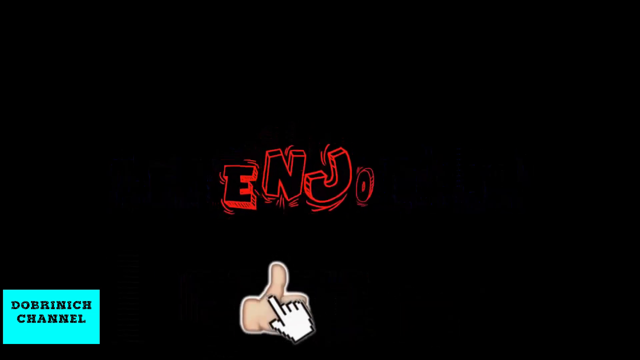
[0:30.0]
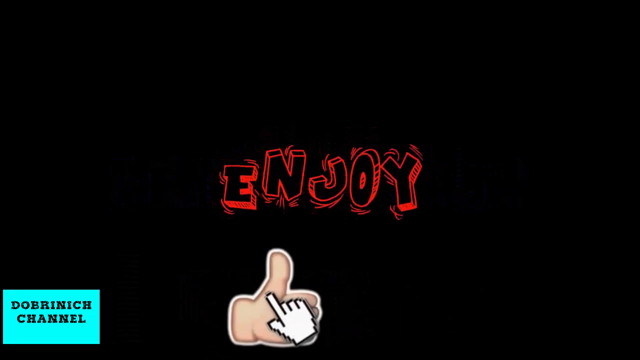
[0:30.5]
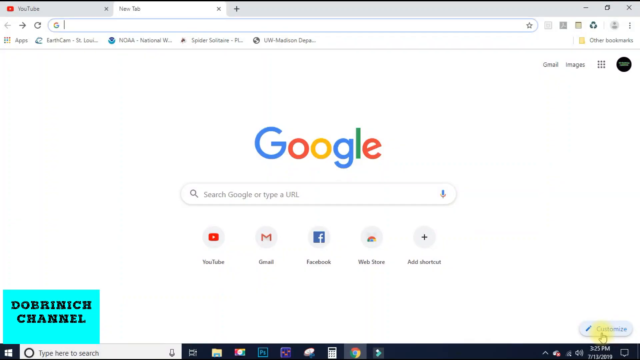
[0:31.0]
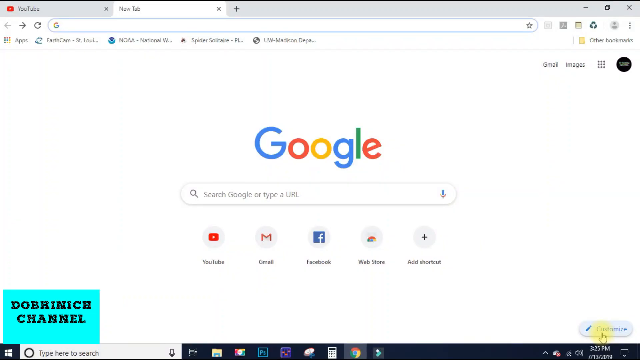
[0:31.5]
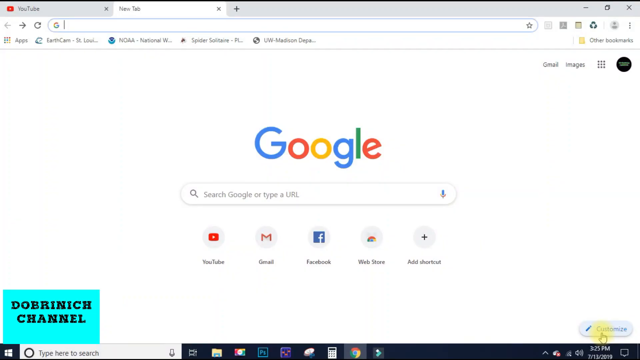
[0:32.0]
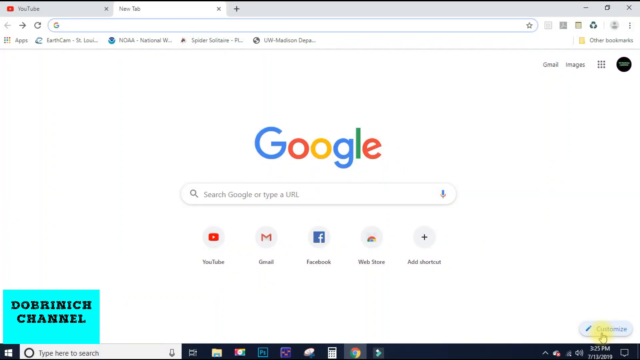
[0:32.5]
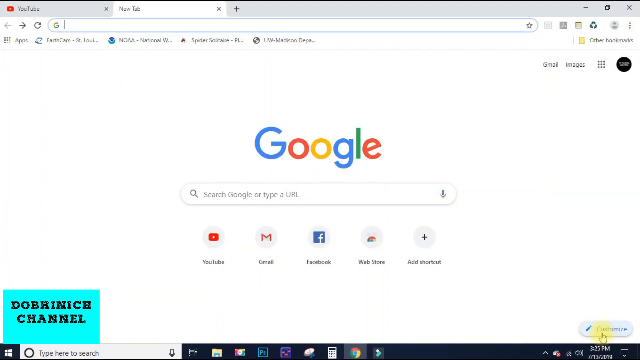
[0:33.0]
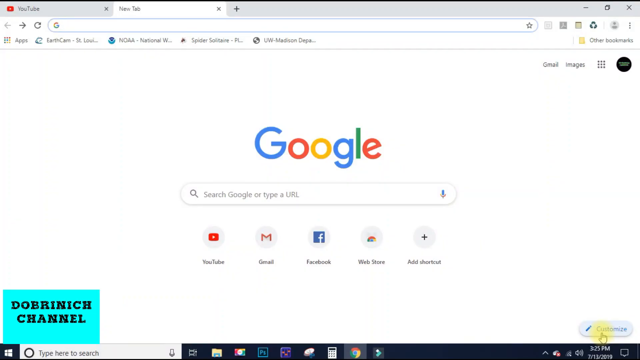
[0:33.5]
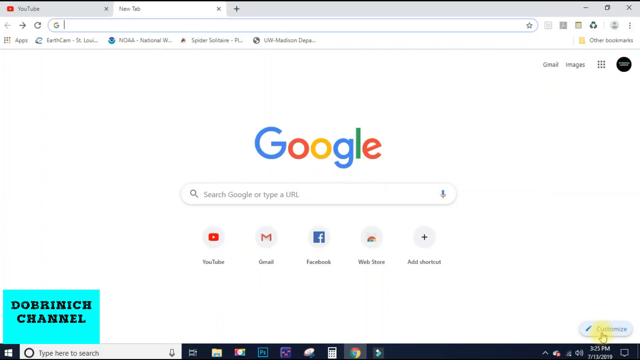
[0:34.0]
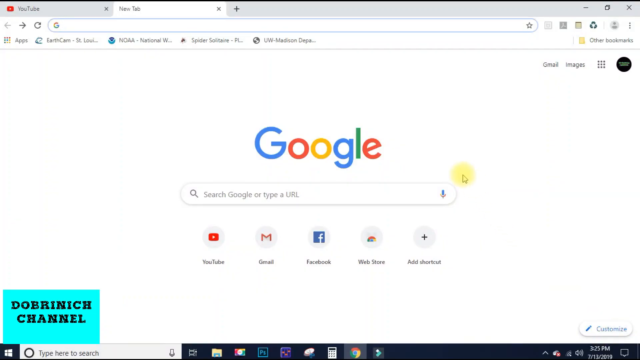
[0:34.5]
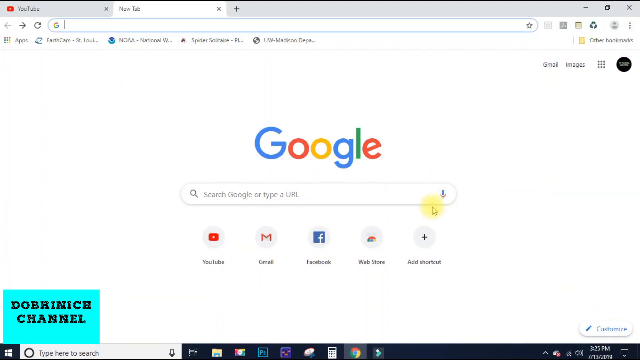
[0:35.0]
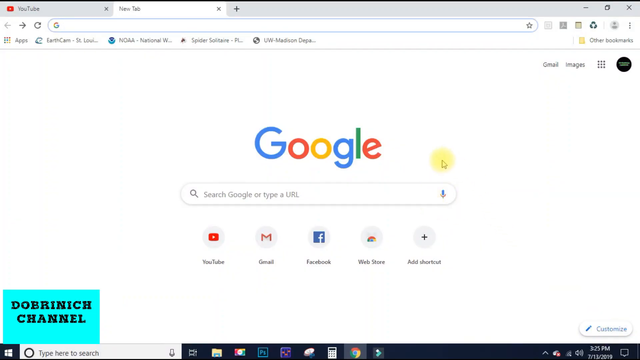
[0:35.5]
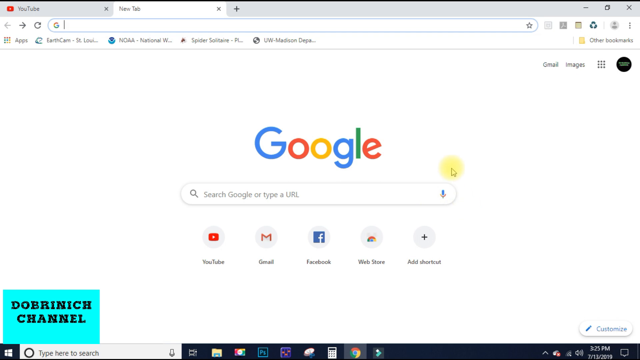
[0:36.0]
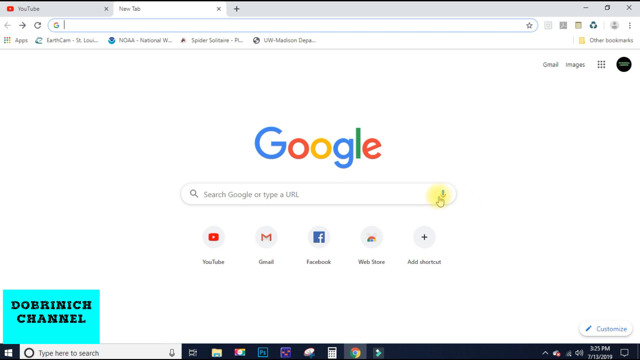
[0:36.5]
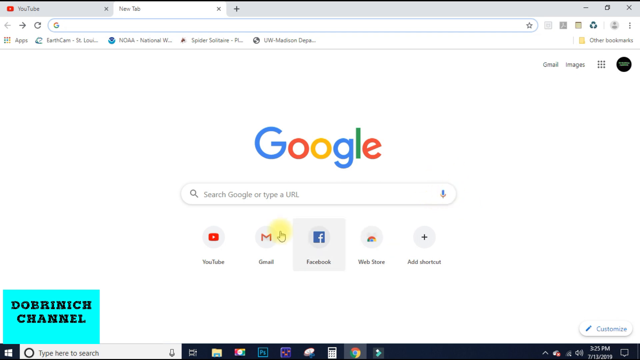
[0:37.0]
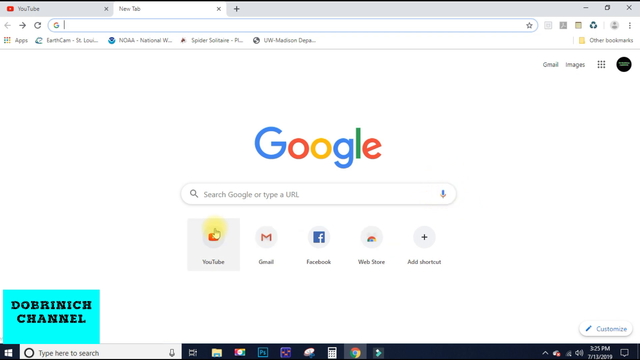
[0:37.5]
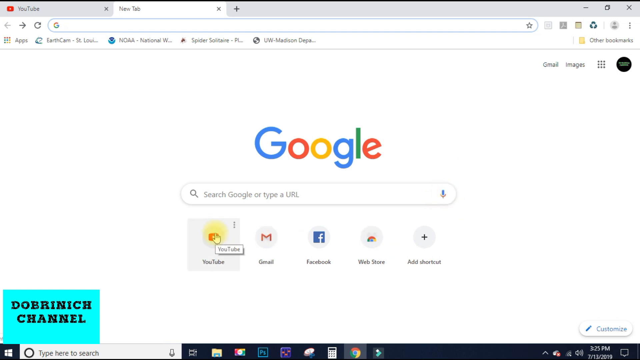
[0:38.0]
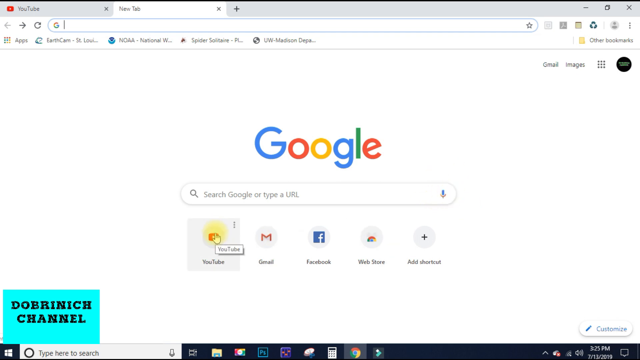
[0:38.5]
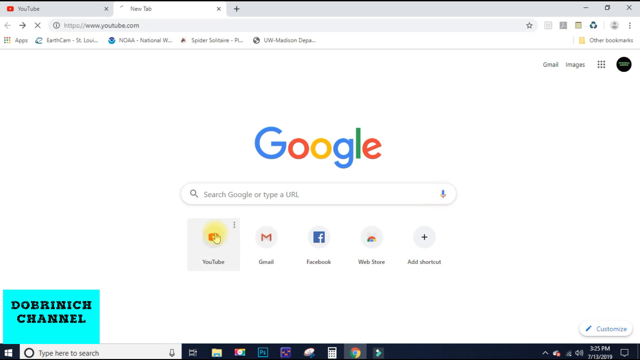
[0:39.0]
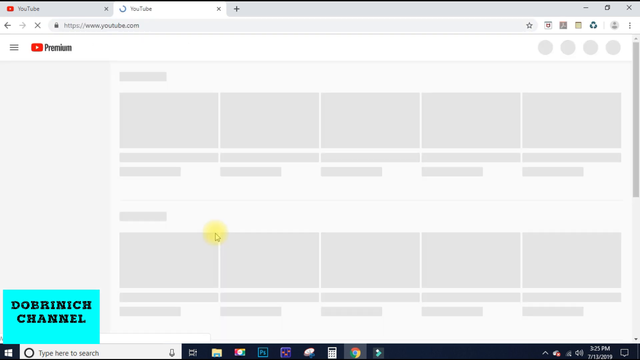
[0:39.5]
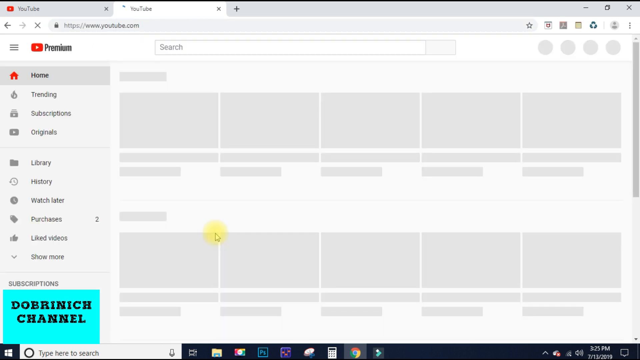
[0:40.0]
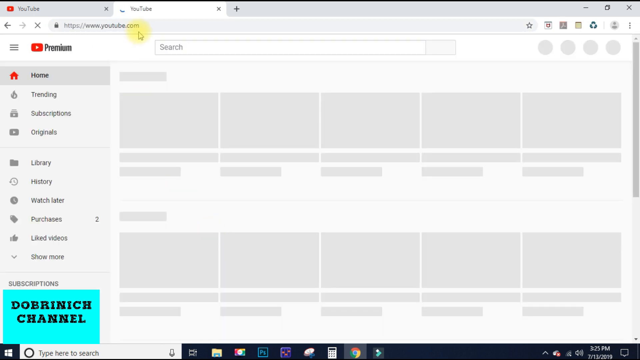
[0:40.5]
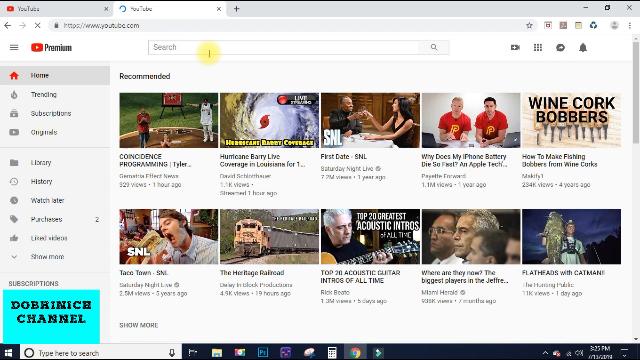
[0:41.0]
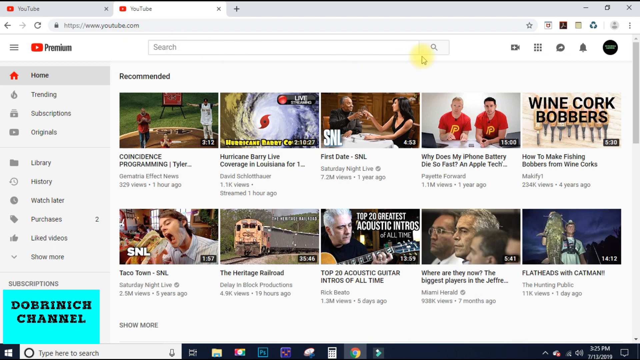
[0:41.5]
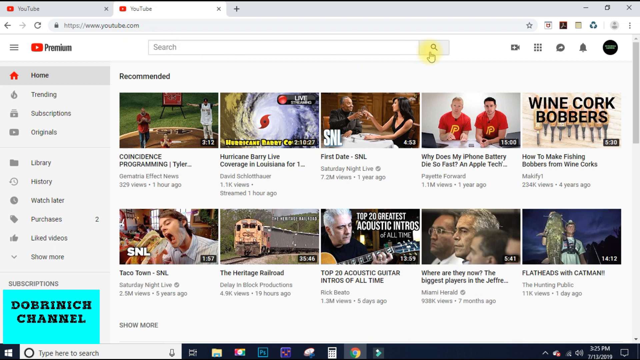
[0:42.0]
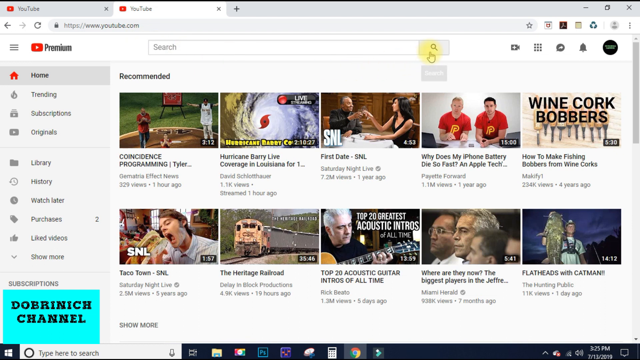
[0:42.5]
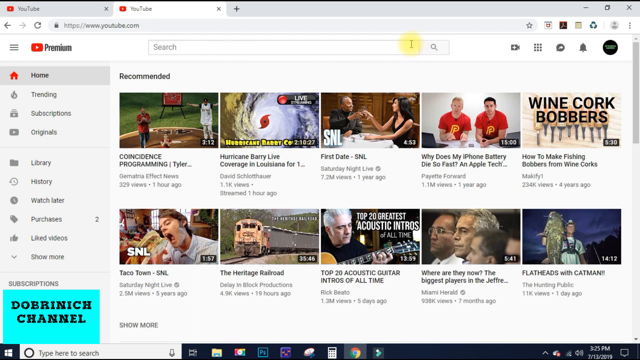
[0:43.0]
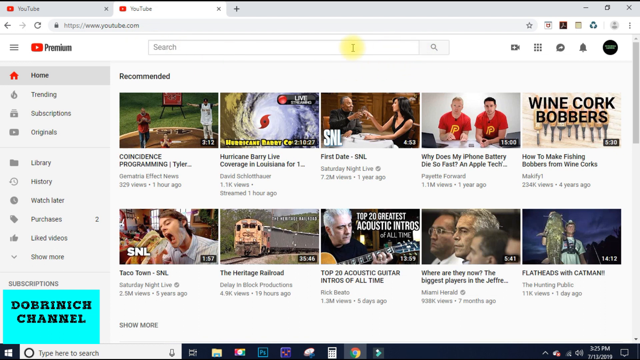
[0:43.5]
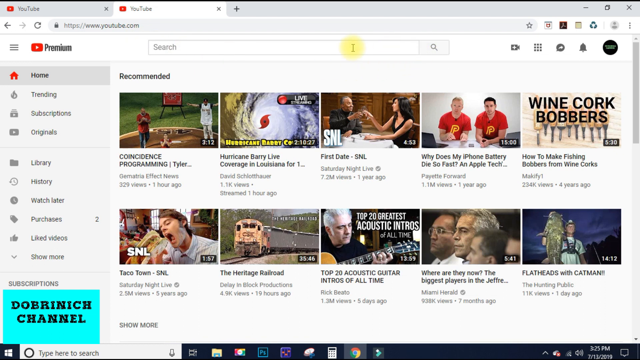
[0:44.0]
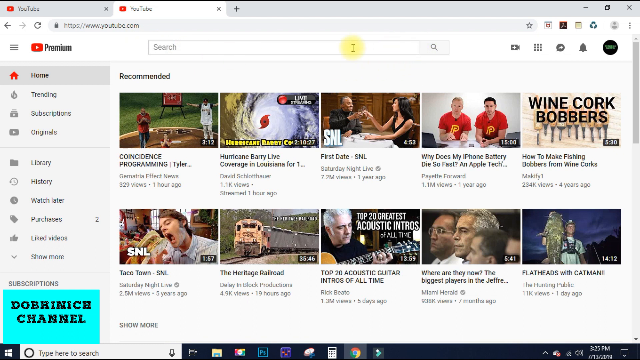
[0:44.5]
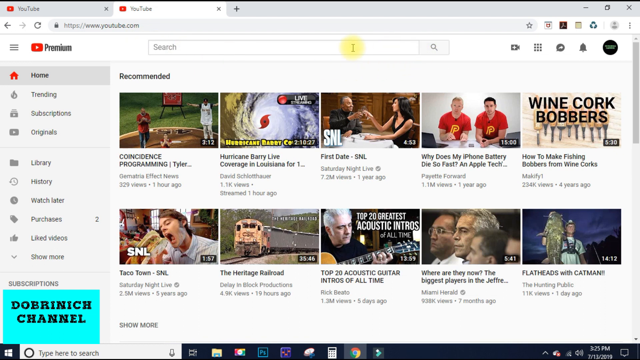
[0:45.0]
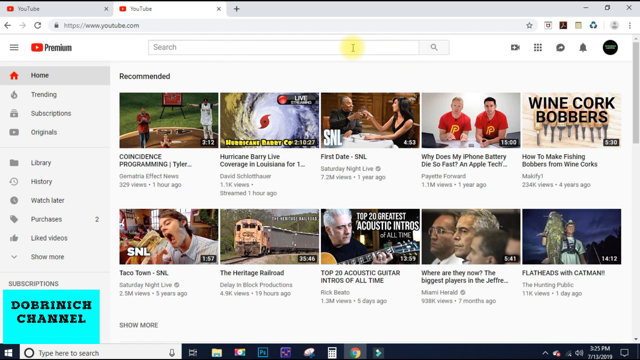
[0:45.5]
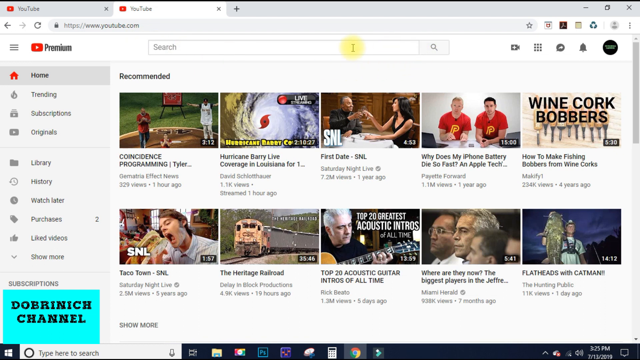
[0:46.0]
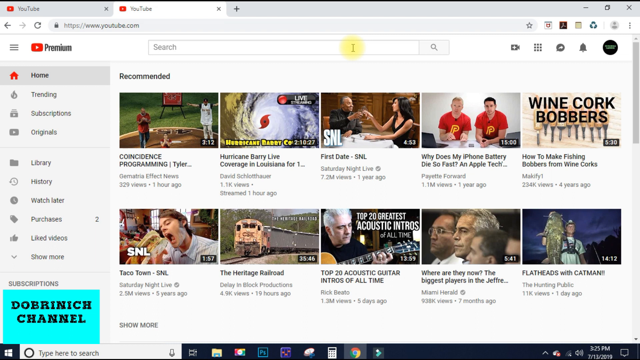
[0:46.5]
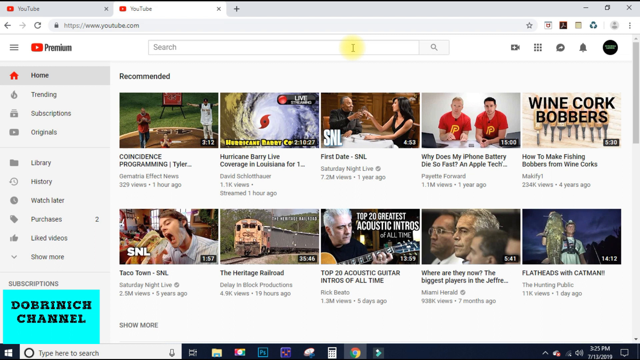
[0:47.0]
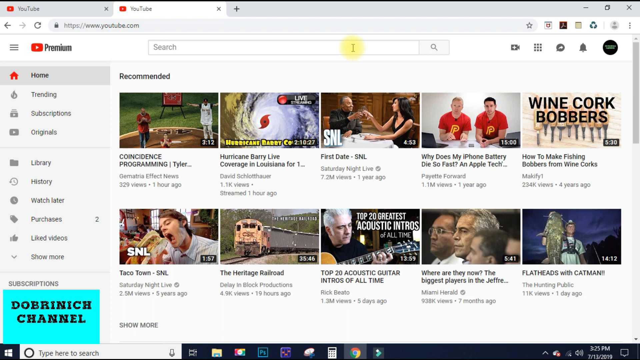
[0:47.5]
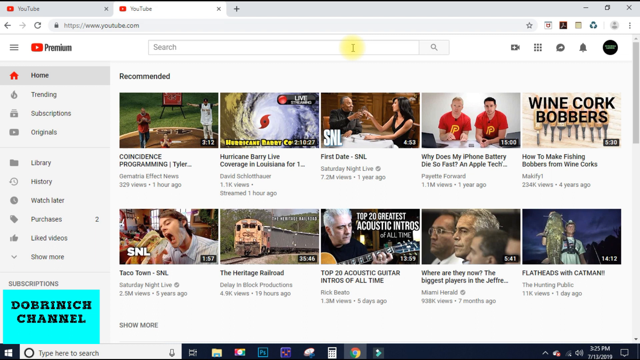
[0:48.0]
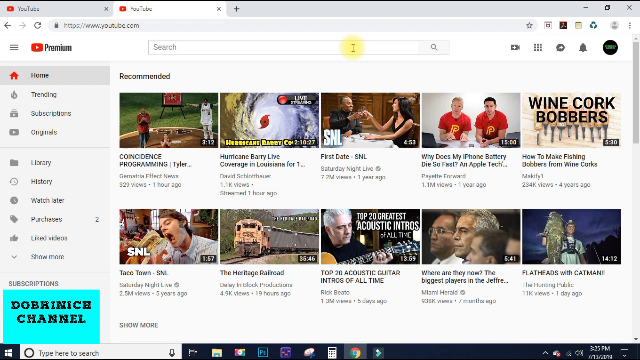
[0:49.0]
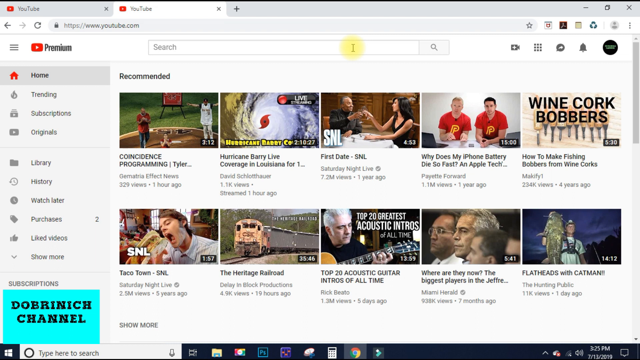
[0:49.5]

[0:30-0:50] The next text to appear is "Enjoy" in the same font as before, but in red rather than blue. The view then moves to the Google webpage, with two tabs at the top: the New tab, which the person is on, and YouTube in the top left. The cursor moves over the microphone symbol to the right of the Google search bar, then down to the YouTube logo below the search bar, and the person clicks it, bringing up the YouTube page. They then type in the YouTube search bar at the top and hover the mouse over the search bar. Whenever the cursor moves around the screen, a yellow circle follows it, making it easy to see exactly where it is going.